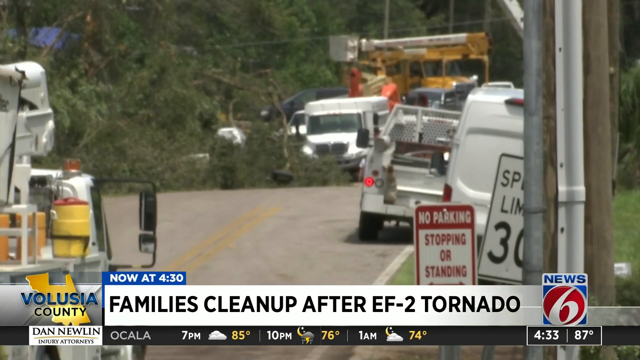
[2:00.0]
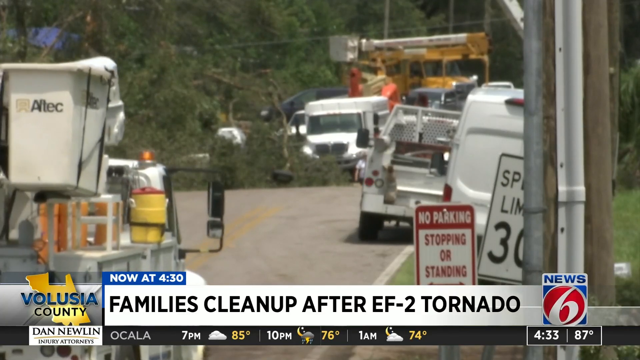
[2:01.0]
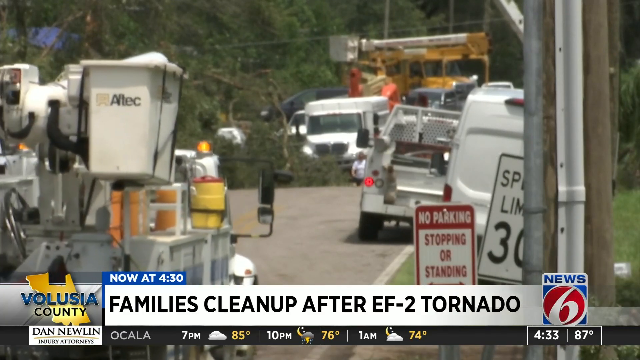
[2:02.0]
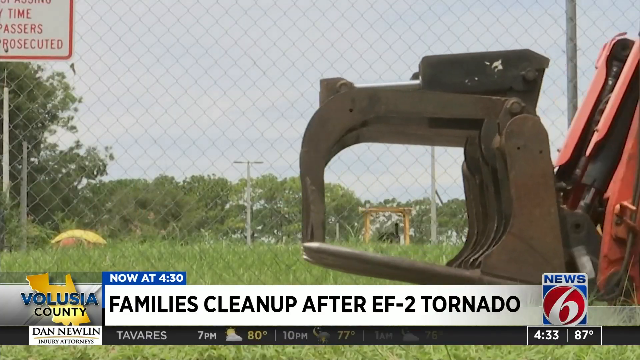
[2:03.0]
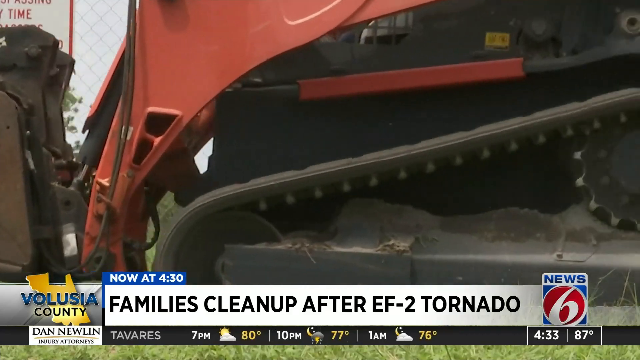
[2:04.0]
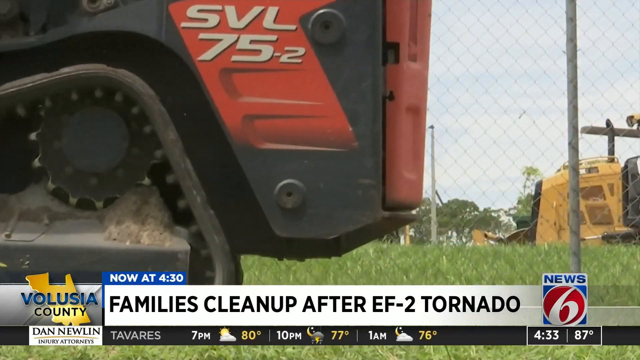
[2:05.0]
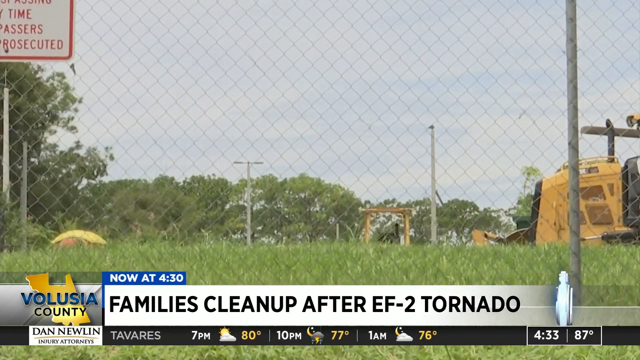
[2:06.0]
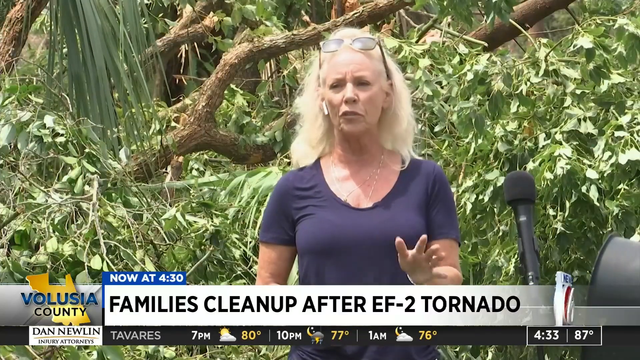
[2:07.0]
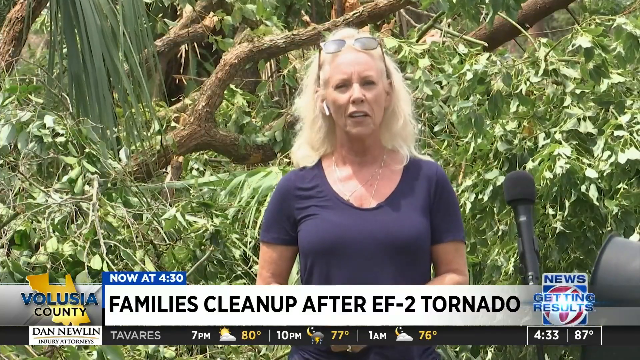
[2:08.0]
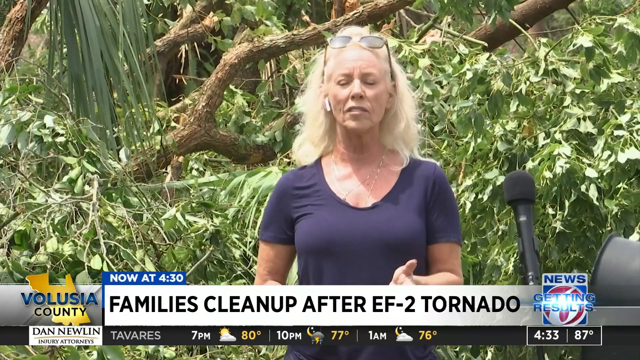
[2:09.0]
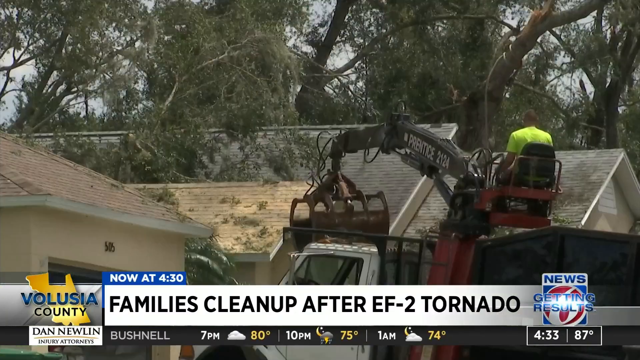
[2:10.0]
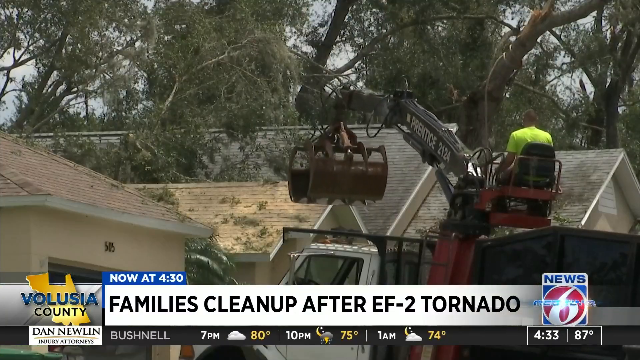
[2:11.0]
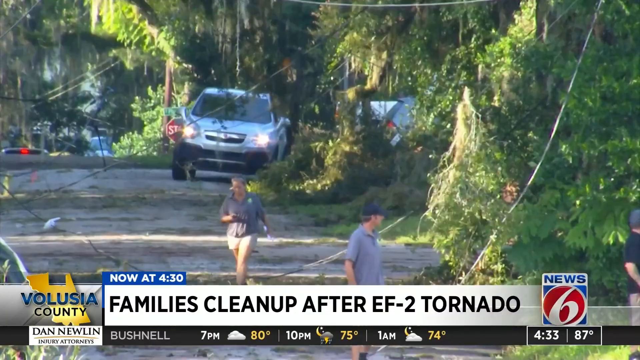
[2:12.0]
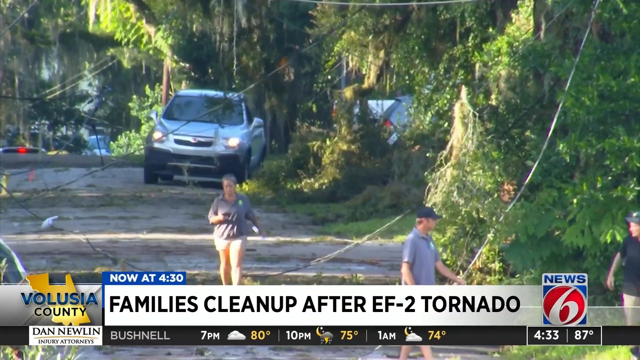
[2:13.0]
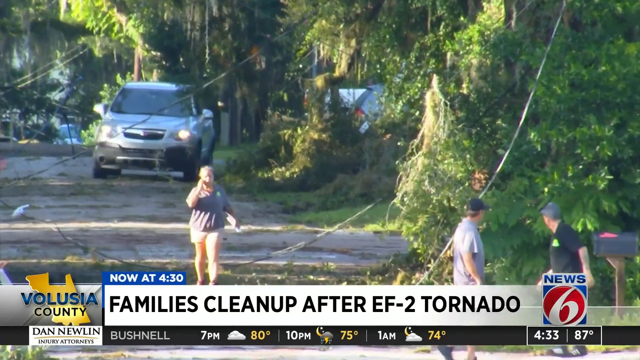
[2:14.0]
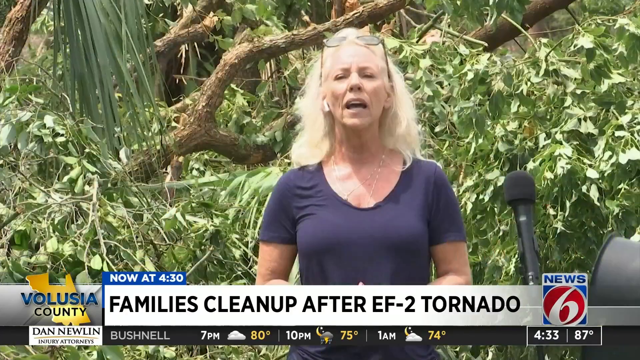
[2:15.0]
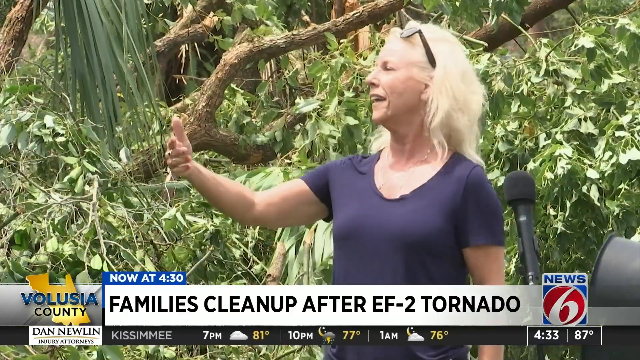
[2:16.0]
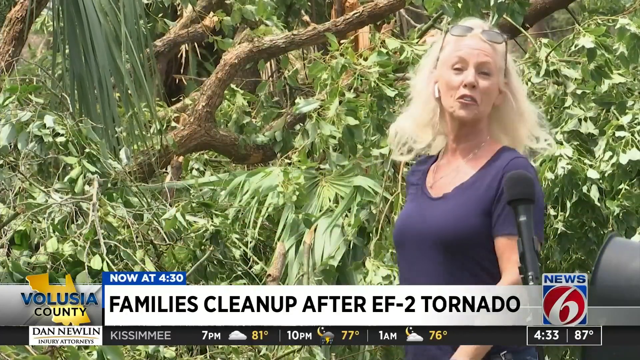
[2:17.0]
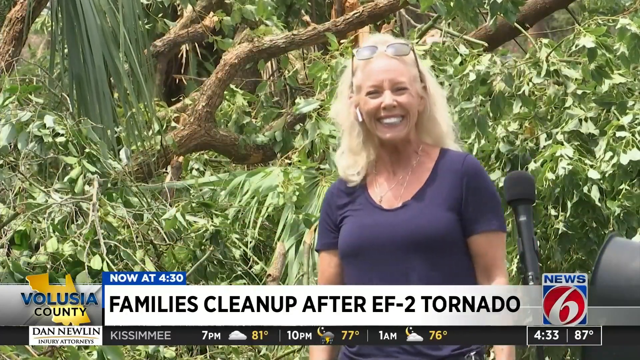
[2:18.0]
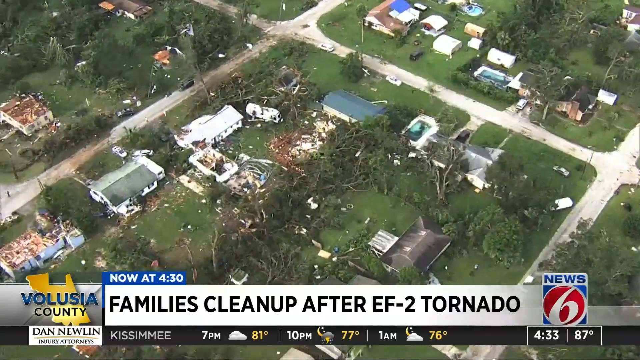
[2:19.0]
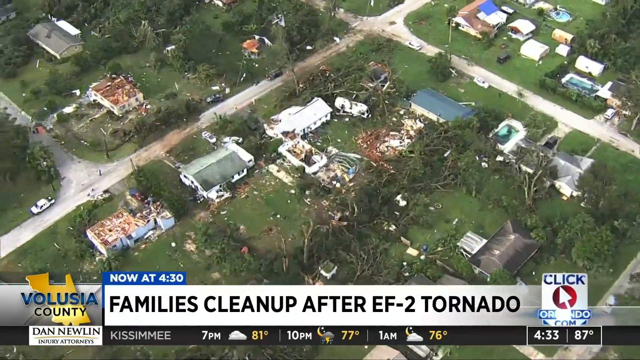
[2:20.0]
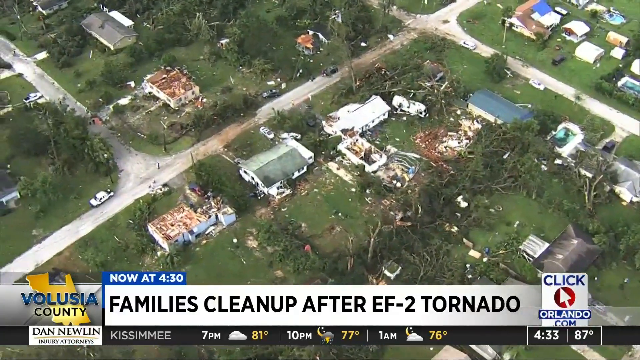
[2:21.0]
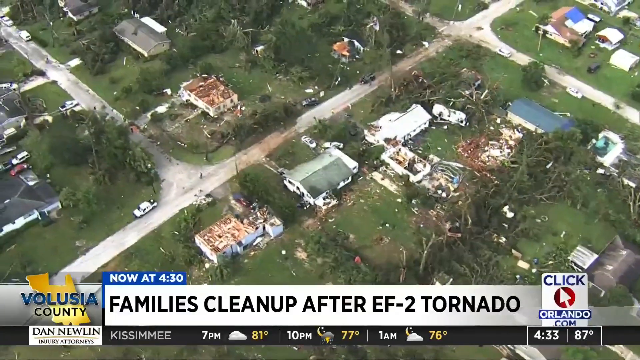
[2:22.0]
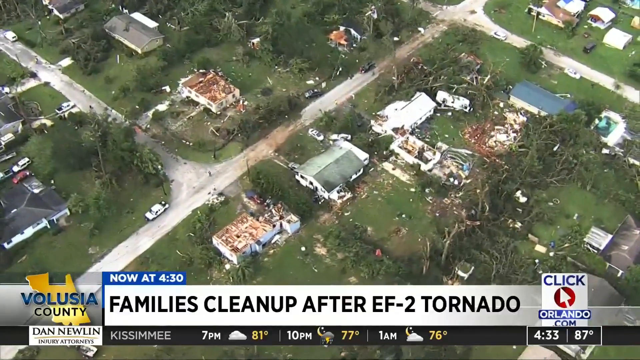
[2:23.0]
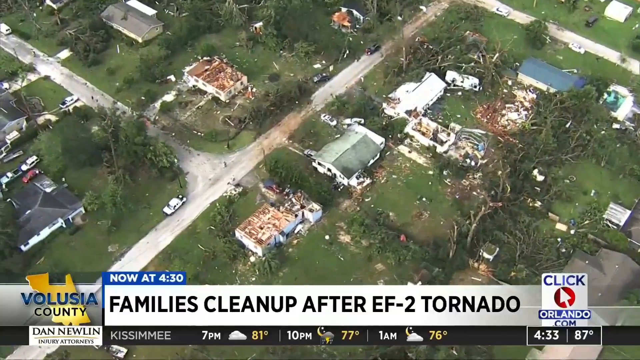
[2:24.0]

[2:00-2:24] A sign reads "no parking stopping or standing" and "speed limit 30". A number of utility trucks are on the street, including many bucket trucks and white utility vehicles, and a yellow Gatorade cooler with a red lid is attached to one of the trucks. Trees are down. A backhoe or similar machine rolls across the screen. A blonde woman talks. Someone in what appears to be a bucket truck, sitting on an elevated platform, uses a crane-type device to pick things up, with houses around him. Cars drive around downed trees. The blonde woman, who has glasses in her hair, appears again, and then the aerial view of the damaged city returns.